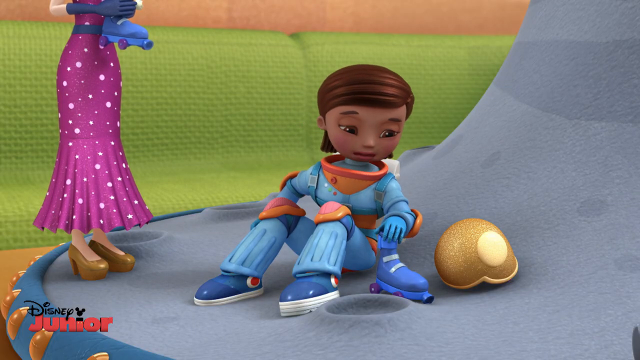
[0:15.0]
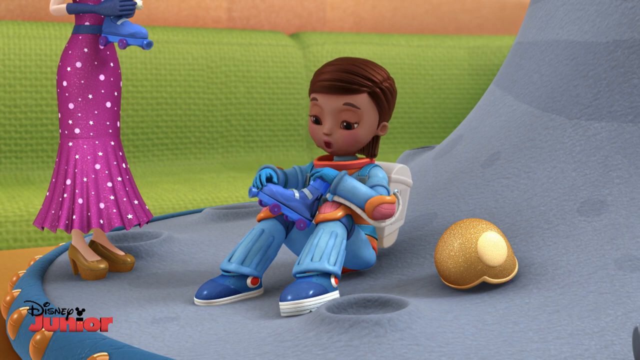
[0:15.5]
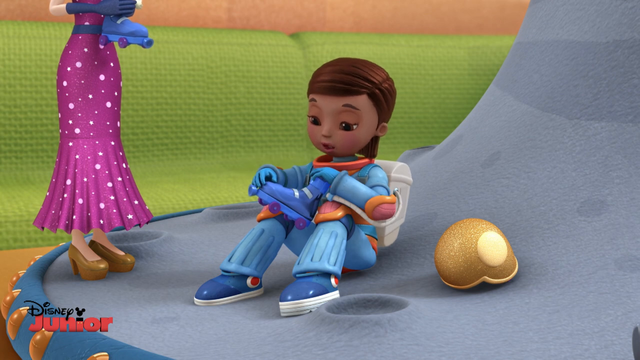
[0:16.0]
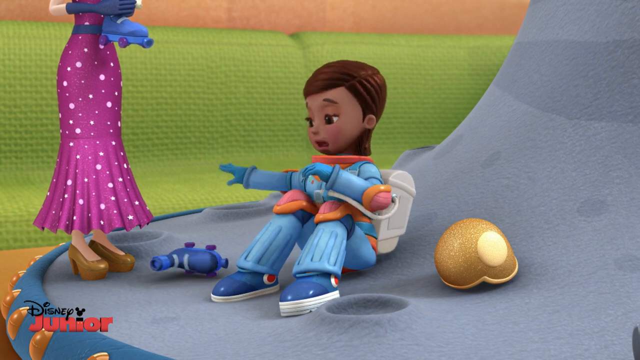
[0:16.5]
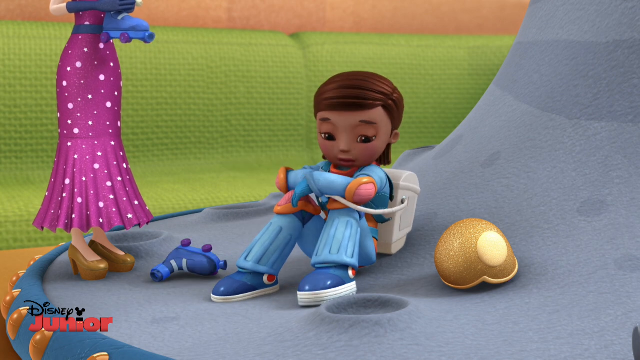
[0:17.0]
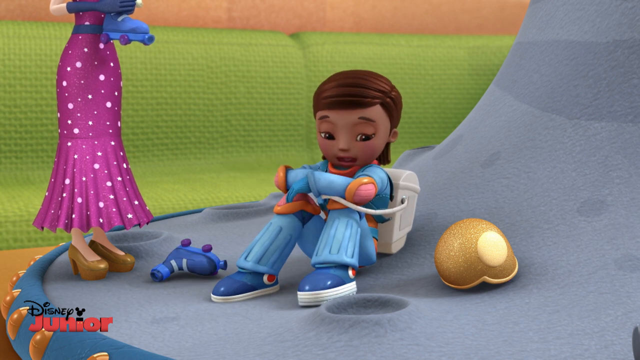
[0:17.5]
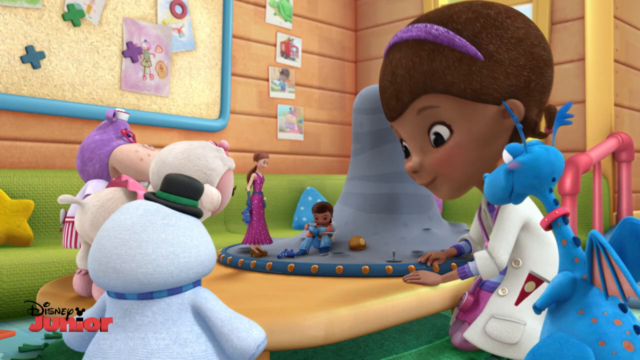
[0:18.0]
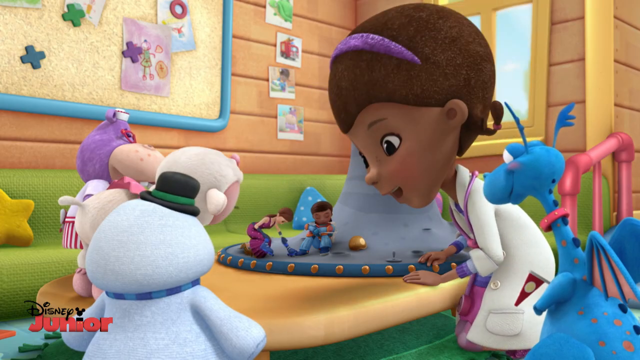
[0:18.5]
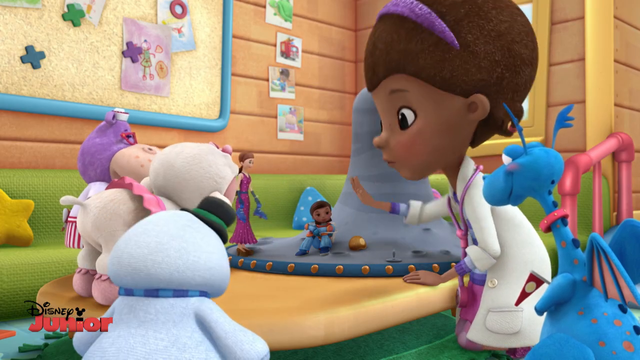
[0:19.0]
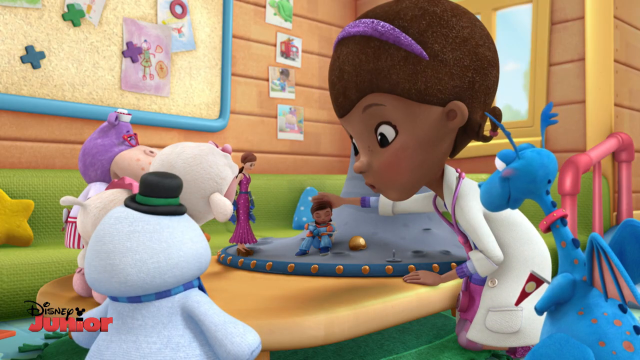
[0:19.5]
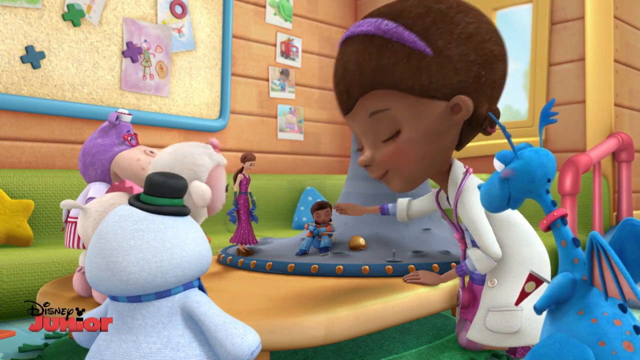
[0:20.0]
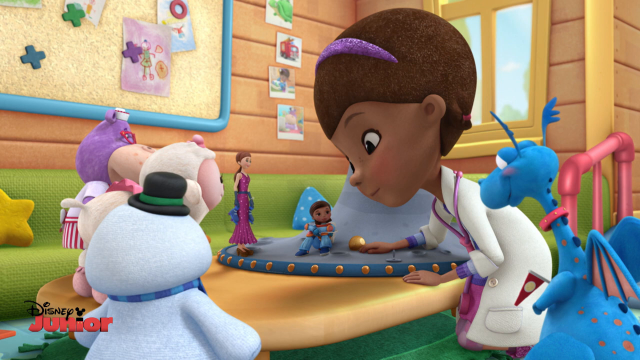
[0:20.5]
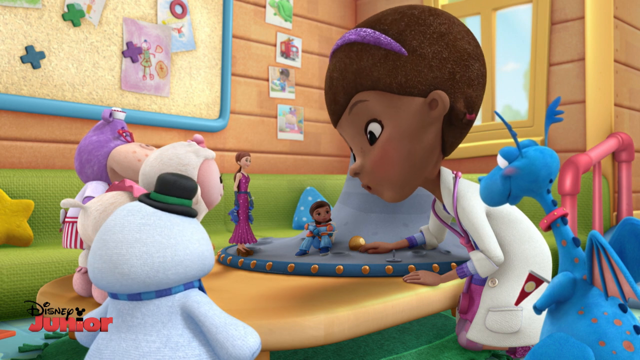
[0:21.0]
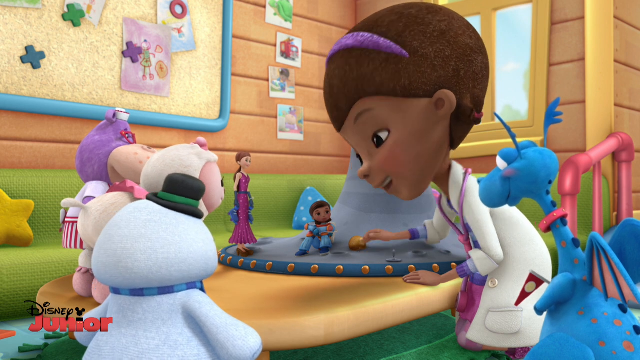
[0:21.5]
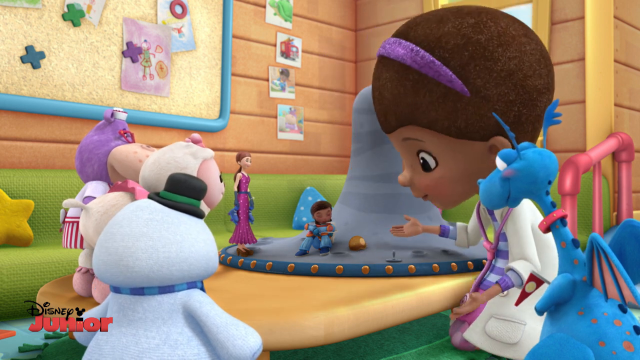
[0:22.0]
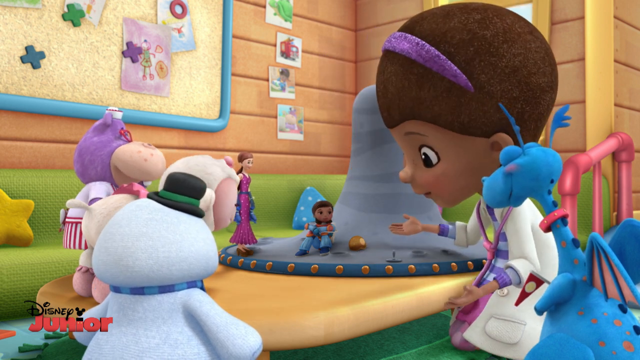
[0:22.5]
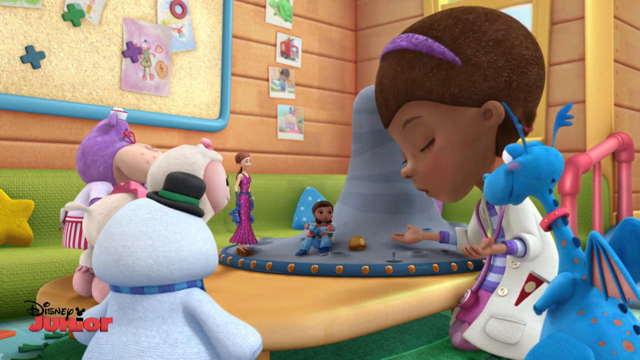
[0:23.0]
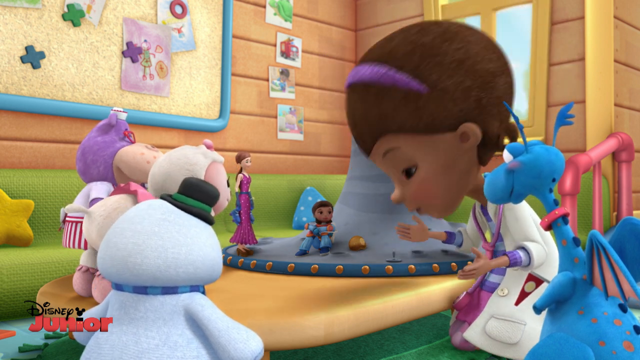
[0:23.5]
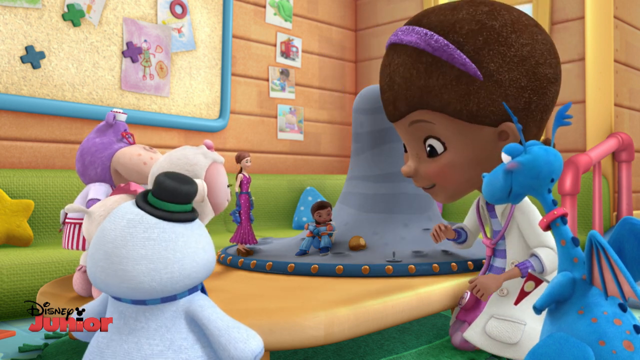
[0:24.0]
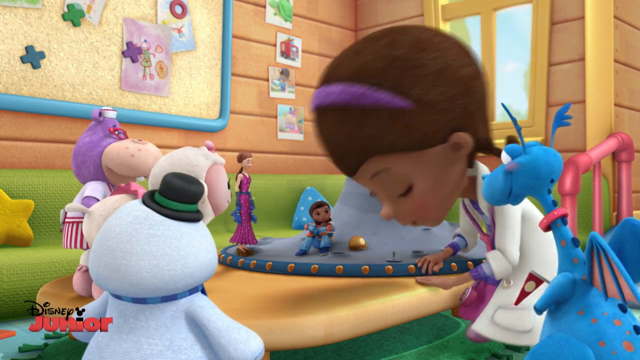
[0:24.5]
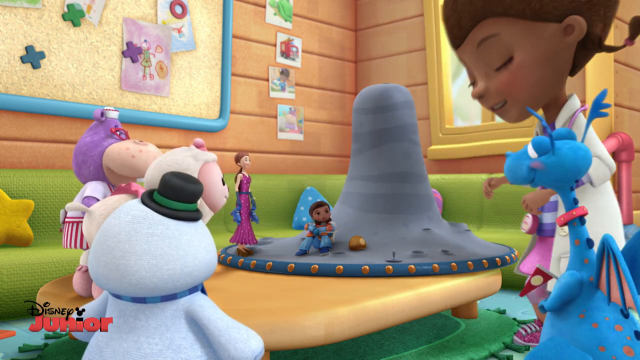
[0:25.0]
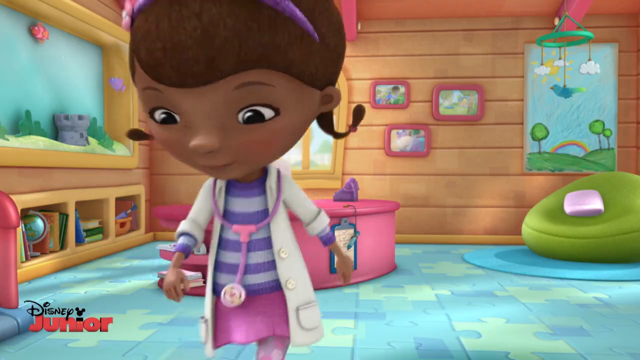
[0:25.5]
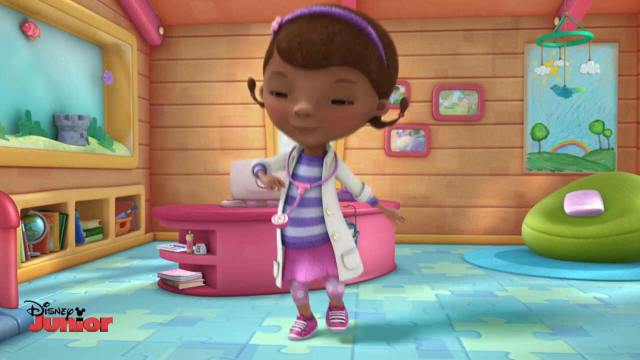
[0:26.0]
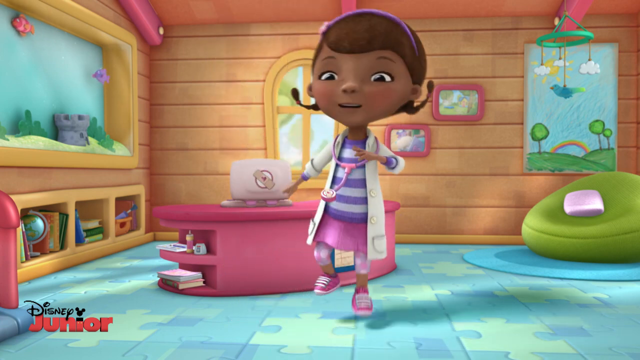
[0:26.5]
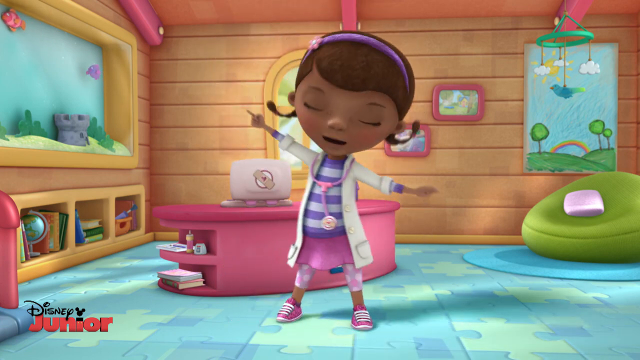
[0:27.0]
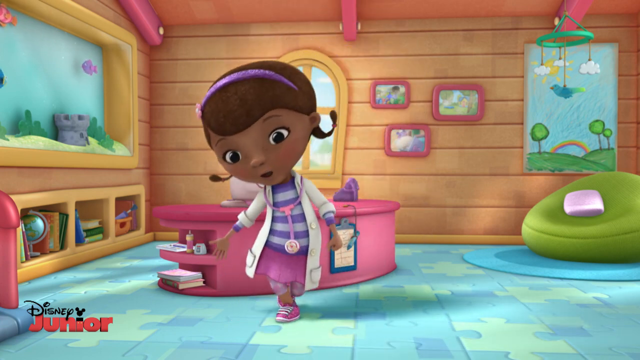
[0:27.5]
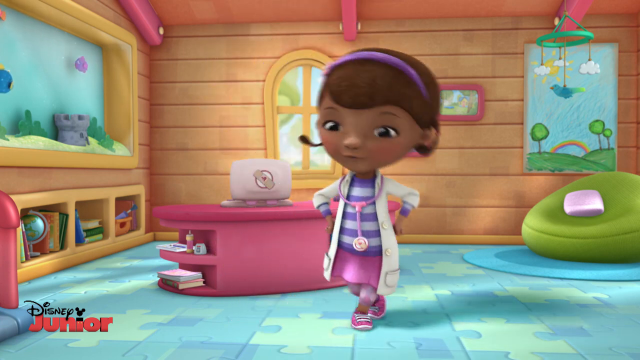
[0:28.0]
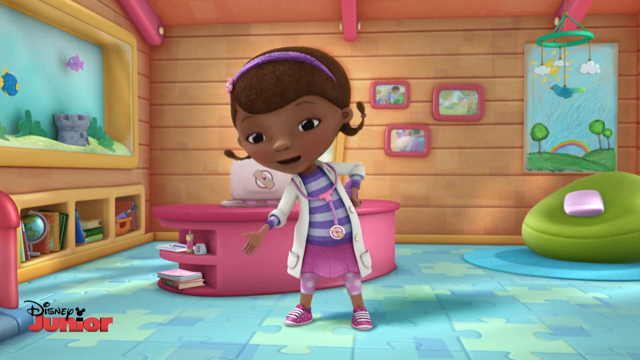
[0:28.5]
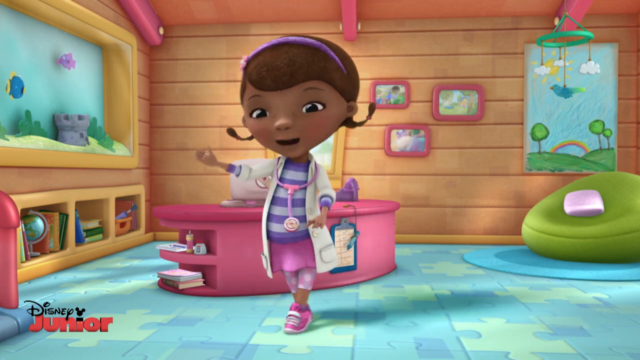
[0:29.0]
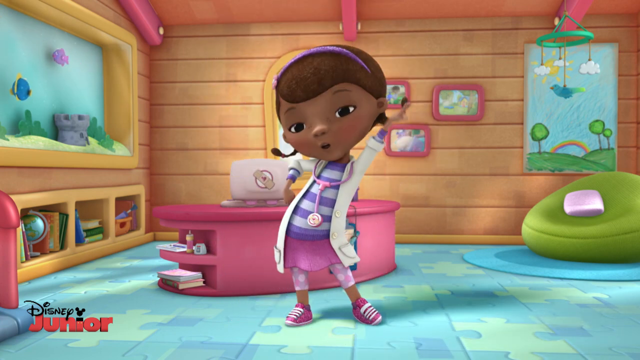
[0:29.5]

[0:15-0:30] The girl in the blue space suit picks up one of the roller skates, looks at it for a second, kind of tosses it to the side, and looks very dejected. As she does this, the camera zooms out. The other girl is a lot bigger than the girl in the space suit, and it looks like she is talking to toys: the others are small toys and stuffed animals. Around her are a dragon, a little snowman, a little sheep, and a kind of purple hippopotamus. She says something to the dejected little astronaut, the stuffed animals nod their heads, and she steps back. There is a little dance for them, perhaps to cheer the astronaut up. They are in a very colorful room with a little aquarium and a little window.